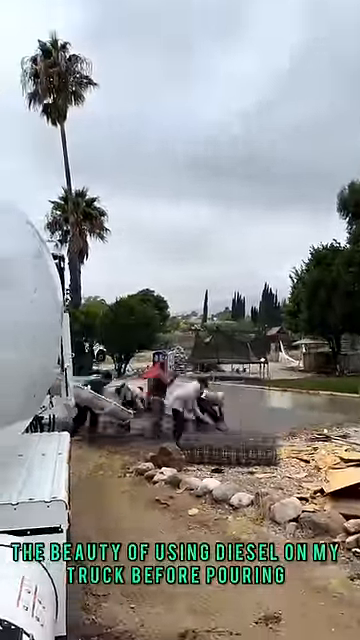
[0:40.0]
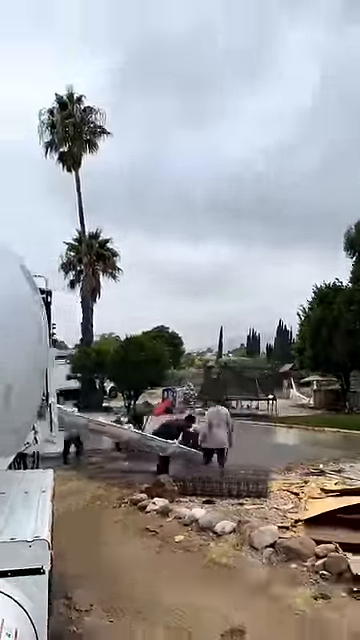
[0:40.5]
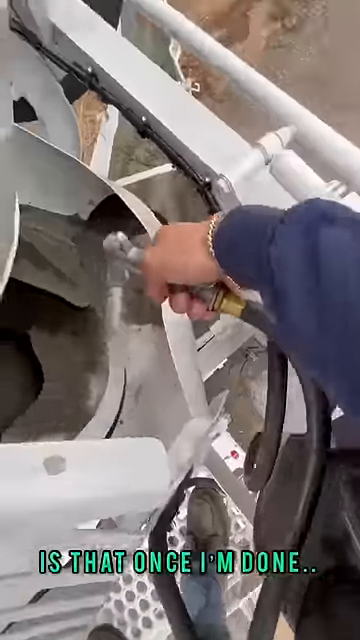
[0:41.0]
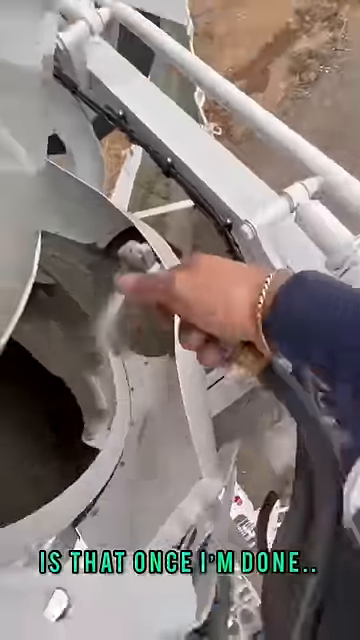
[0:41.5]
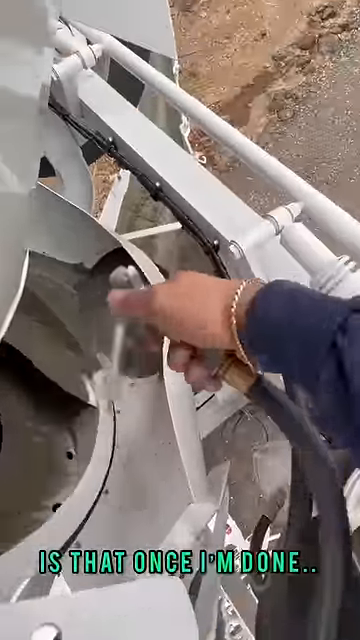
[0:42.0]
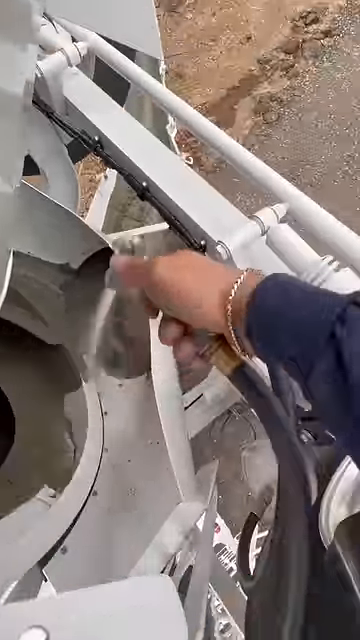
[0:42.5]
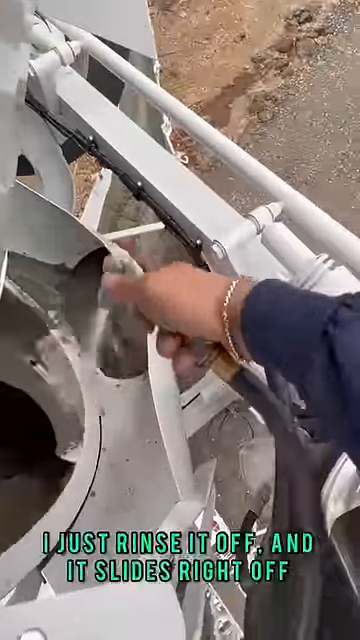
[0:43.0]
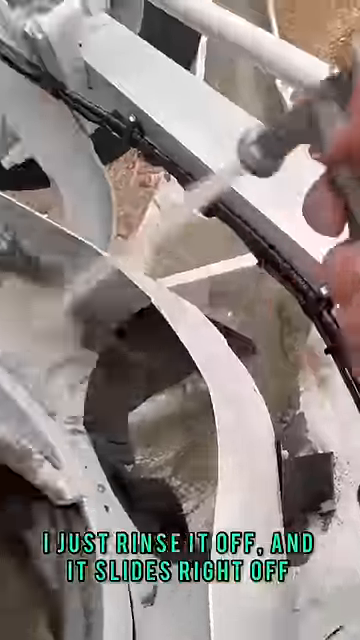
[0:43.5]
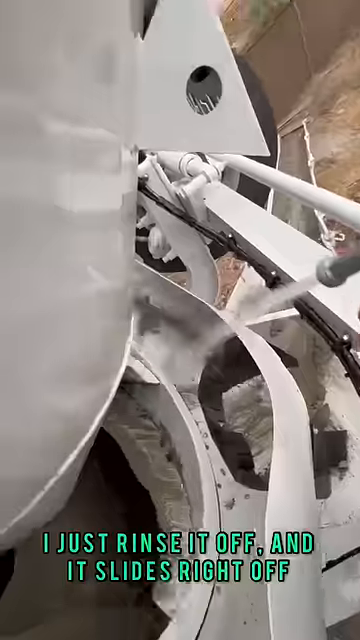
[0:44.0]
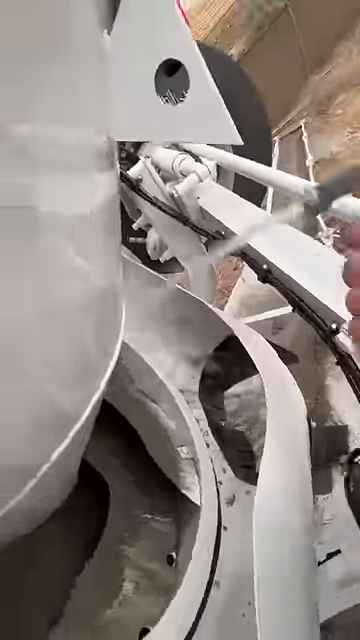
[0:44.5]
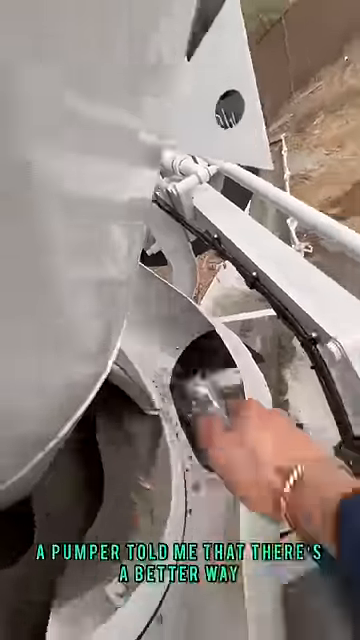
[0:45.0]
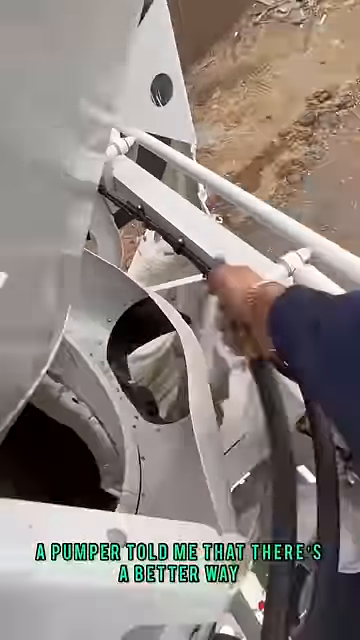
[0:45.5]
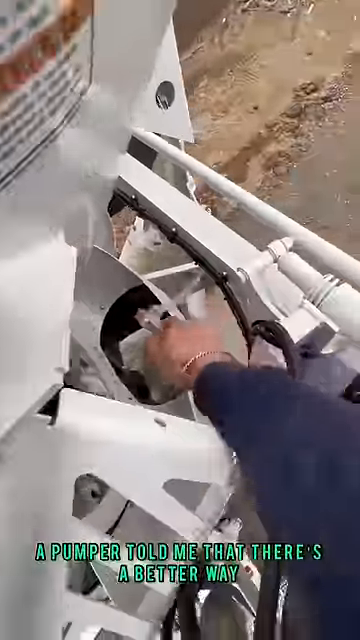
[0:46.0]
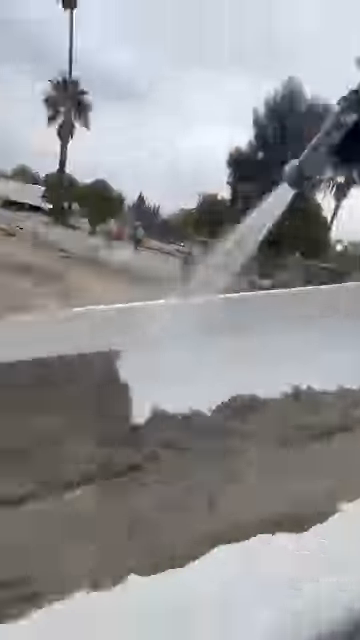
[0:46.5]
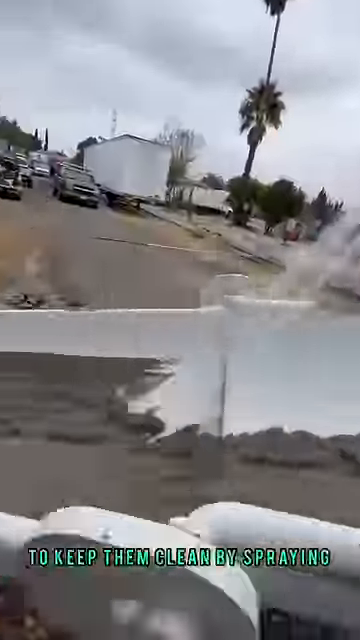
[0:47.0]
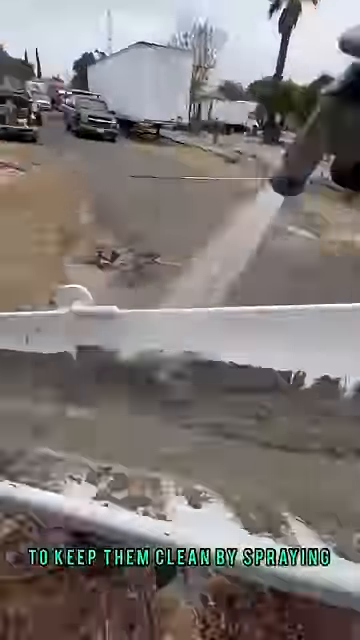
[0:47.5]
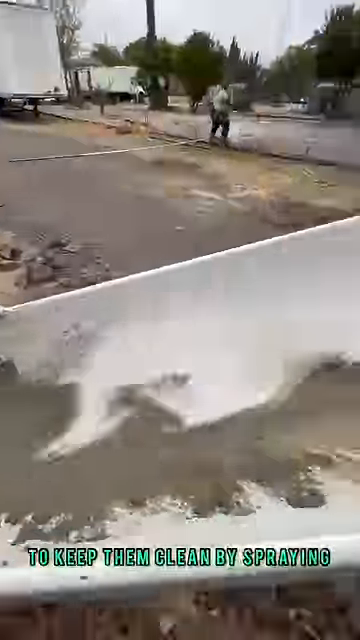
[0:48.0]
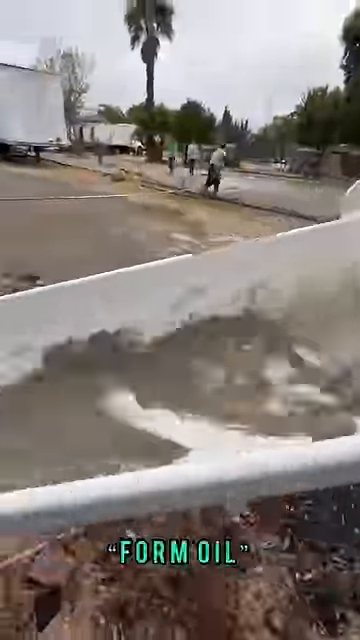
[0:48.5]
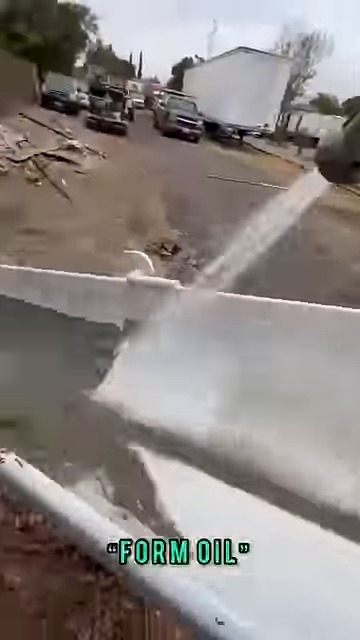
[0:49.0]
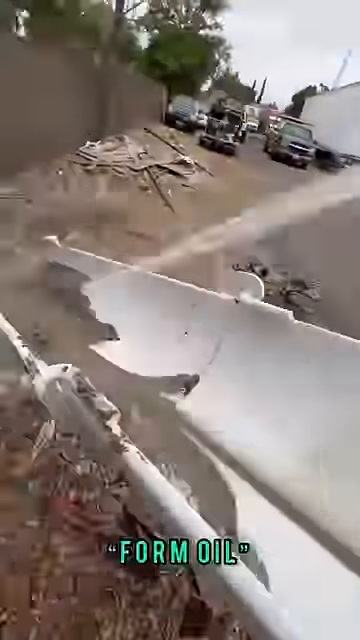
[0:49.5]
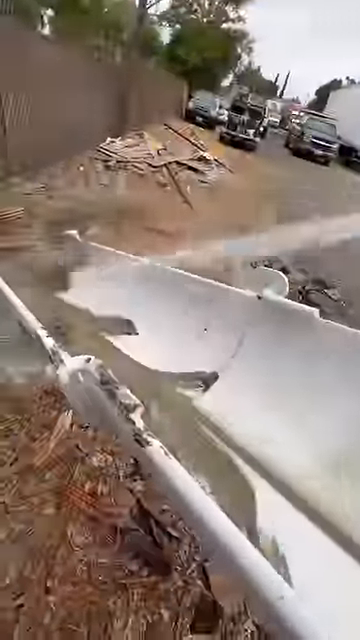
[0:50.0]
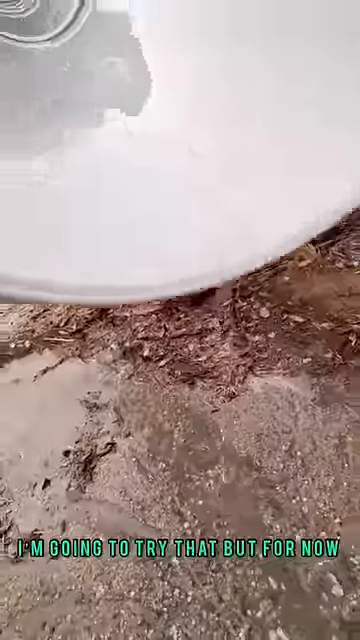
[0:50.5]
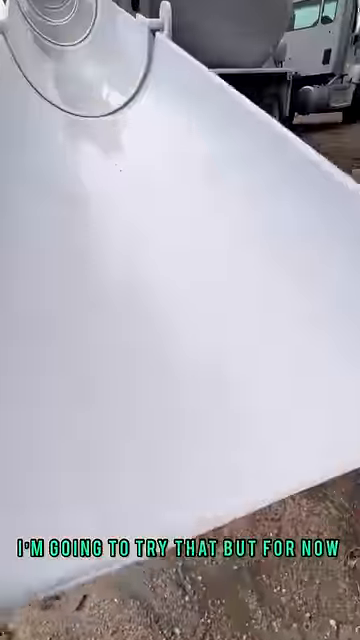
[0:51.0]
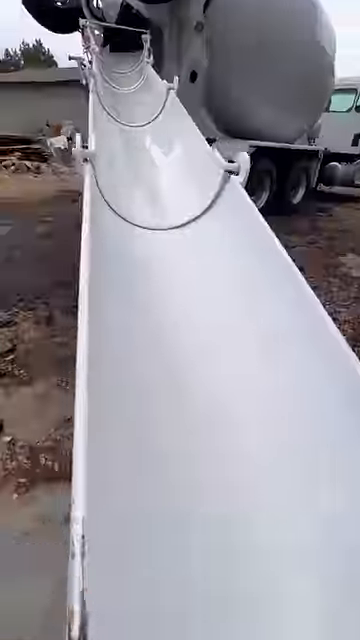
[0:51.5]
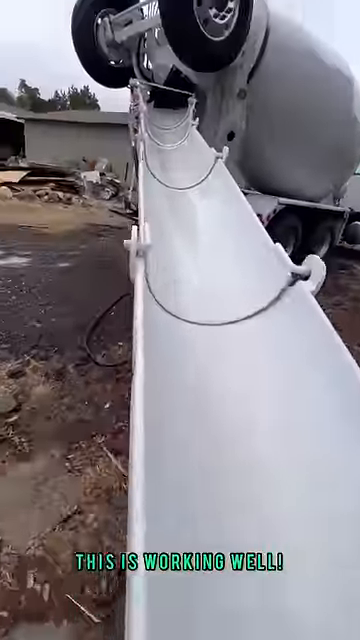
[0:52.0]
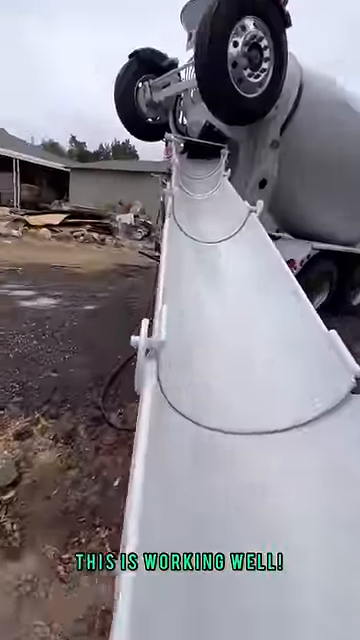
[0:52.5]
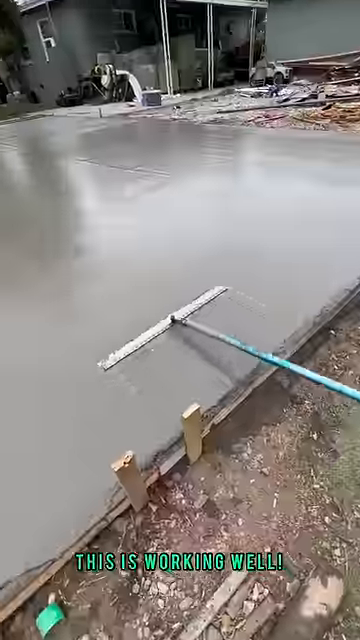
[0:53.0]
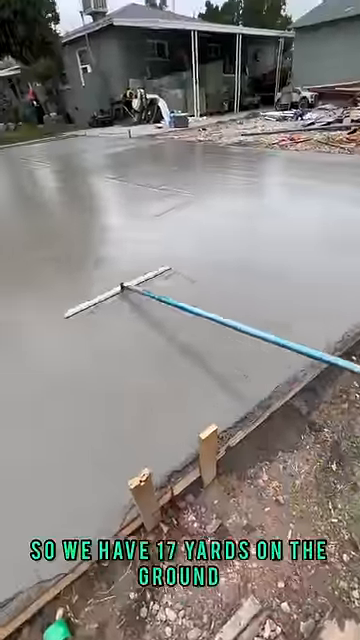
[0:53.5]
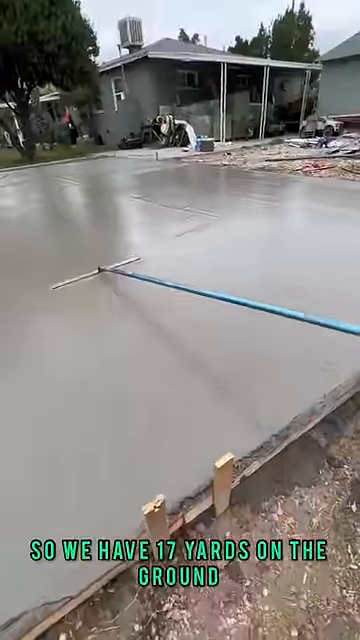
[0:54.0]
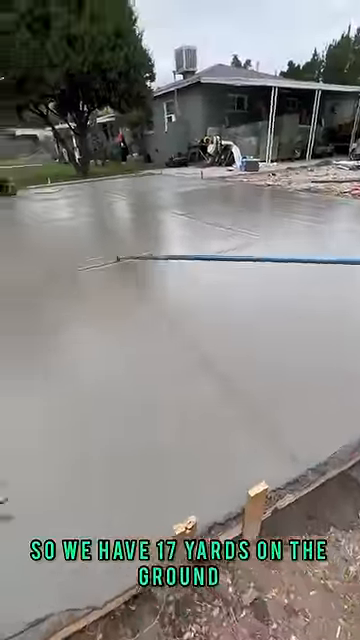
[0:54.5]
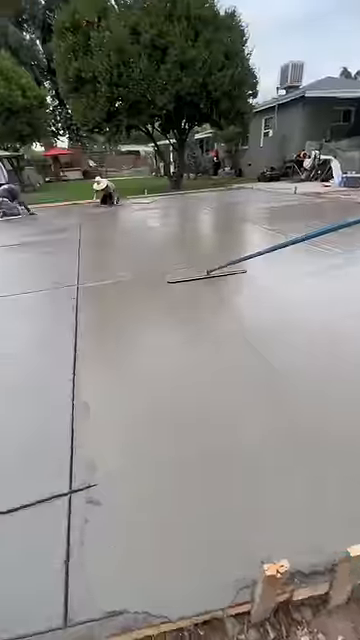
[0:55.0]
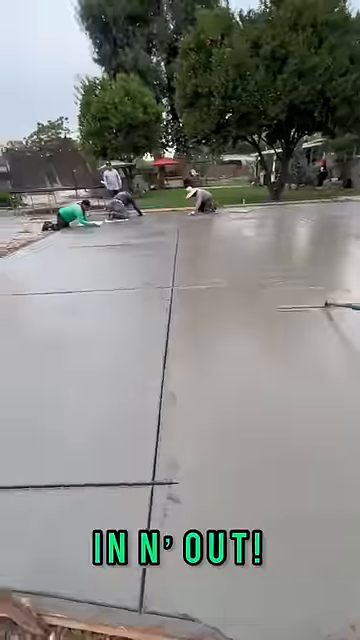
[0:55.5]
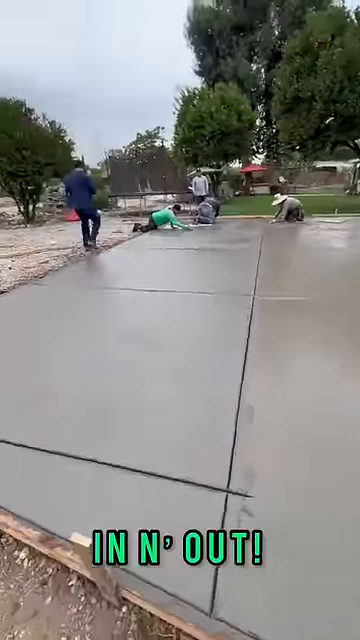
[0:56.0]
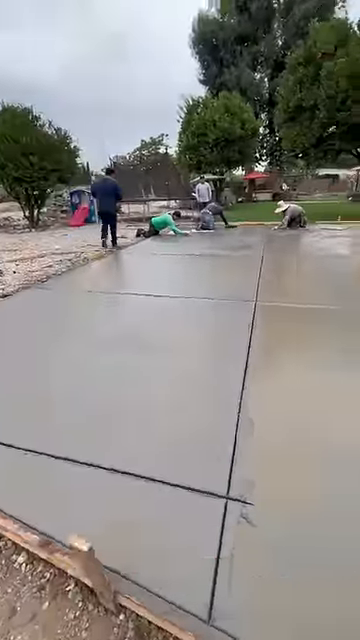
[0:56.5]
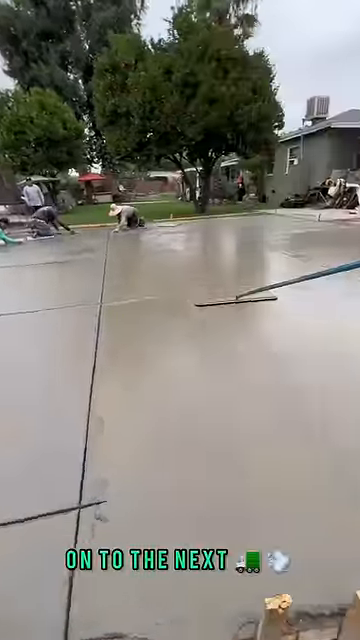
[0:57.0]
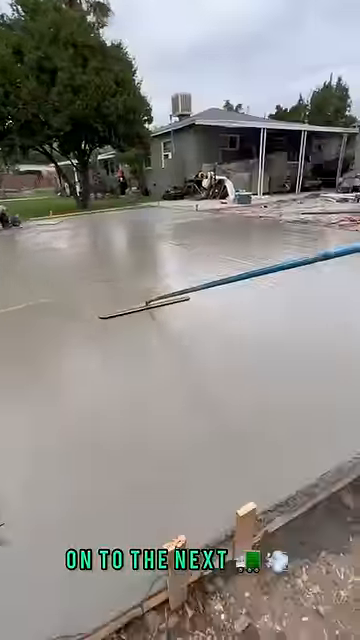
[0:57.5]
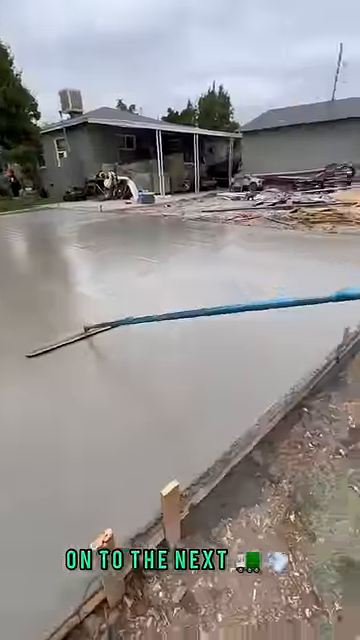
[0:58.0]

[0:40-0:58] The same person who moved the stick shift in the vehicle is now cleaning or rinsing off part of the mixer. Text at the bottom reads "I just rinsed it off and it slides right off." He keeps doing this for quite a few seconds until everything is clean. The scene changes, and the text changes to "a pumper told me that there's a better way to keep them clean by spraying form oil." A little of the chute being cleaned is shown. Then the finished concrete project appears: the concrete on the ground is smoothed out, and workers use some kind of tool to make sure the surface is smooth. The text at the bottom changes again. This is in front of a house, on the driveway of a bungalow with a pretty decent front yard, where the concrete has been poured and is being made sure to set properly.